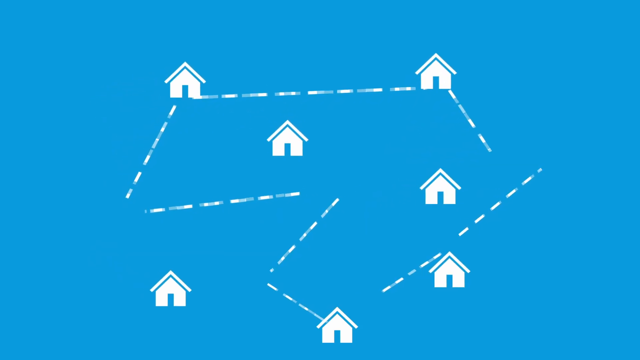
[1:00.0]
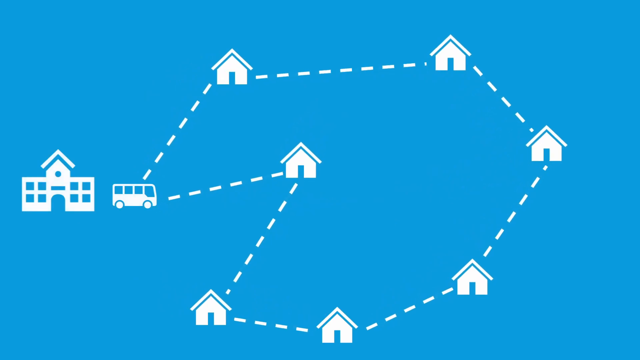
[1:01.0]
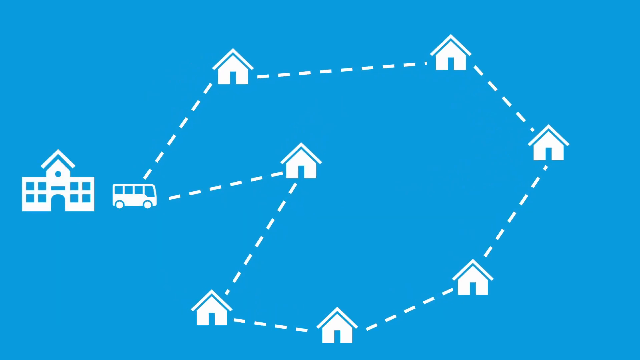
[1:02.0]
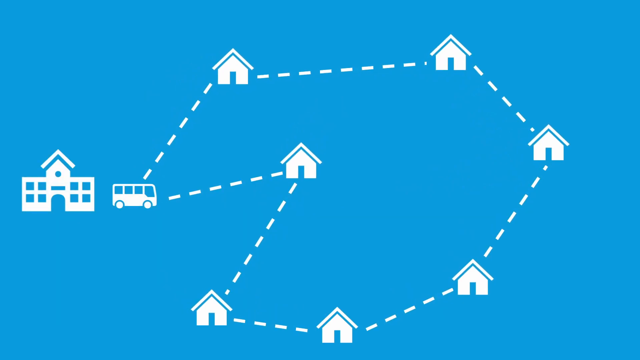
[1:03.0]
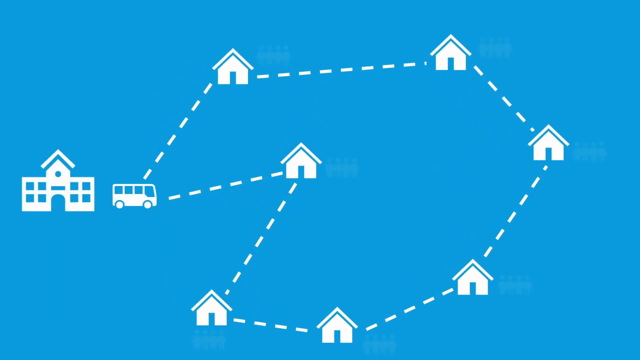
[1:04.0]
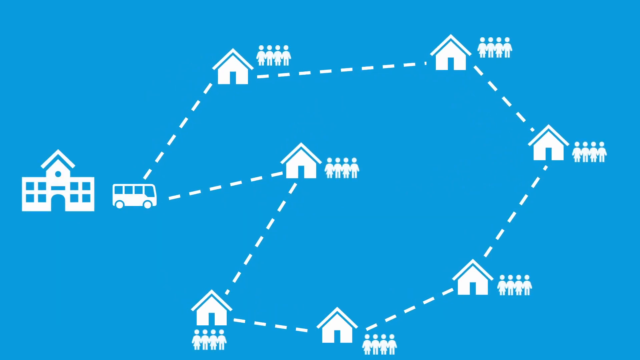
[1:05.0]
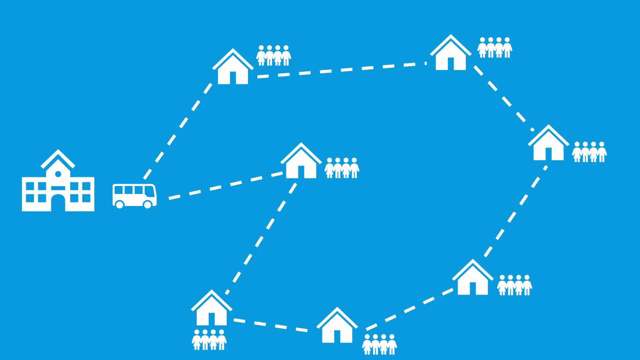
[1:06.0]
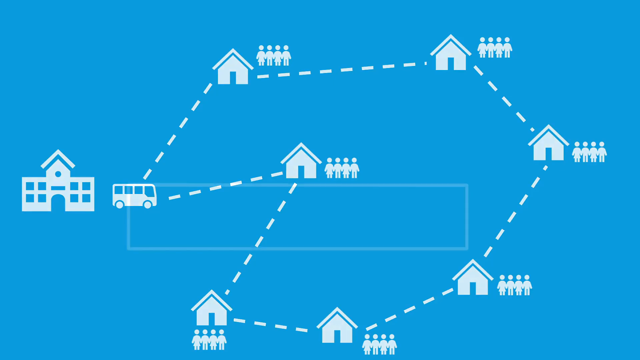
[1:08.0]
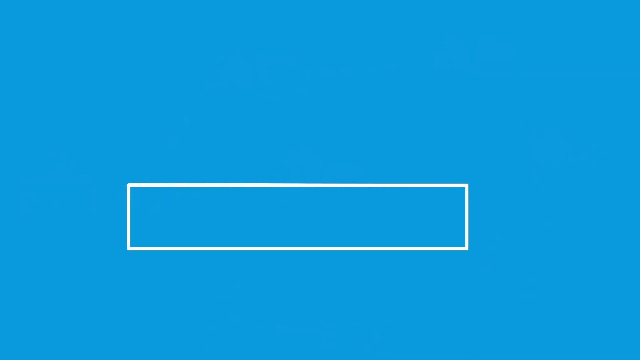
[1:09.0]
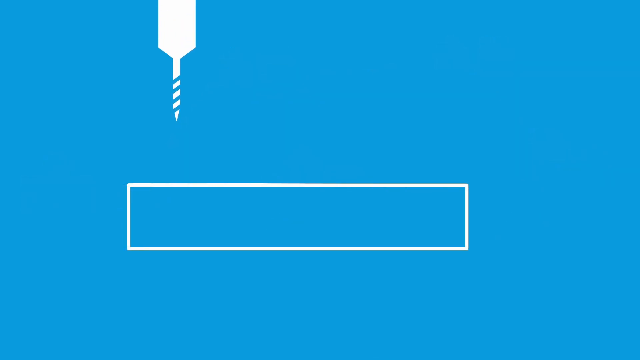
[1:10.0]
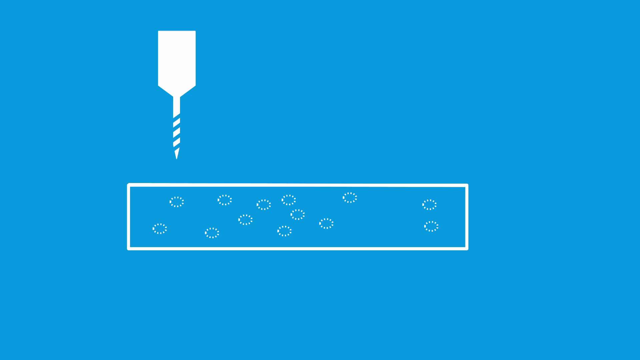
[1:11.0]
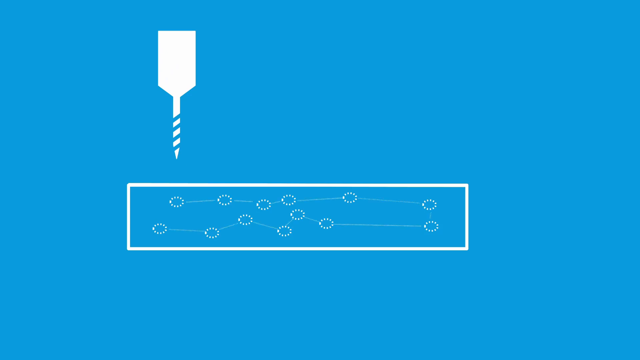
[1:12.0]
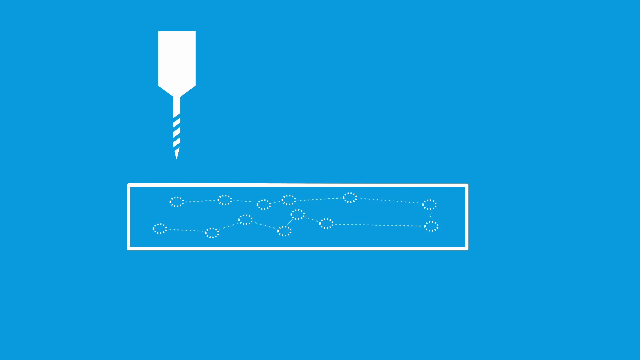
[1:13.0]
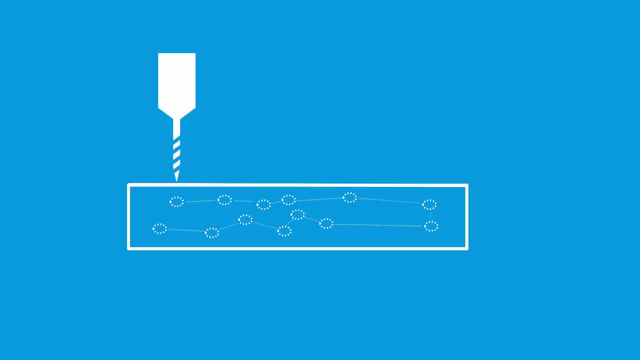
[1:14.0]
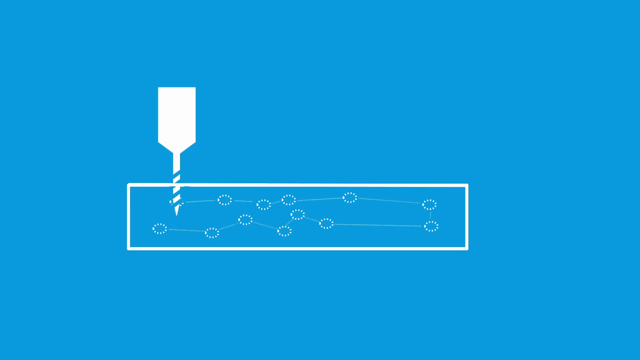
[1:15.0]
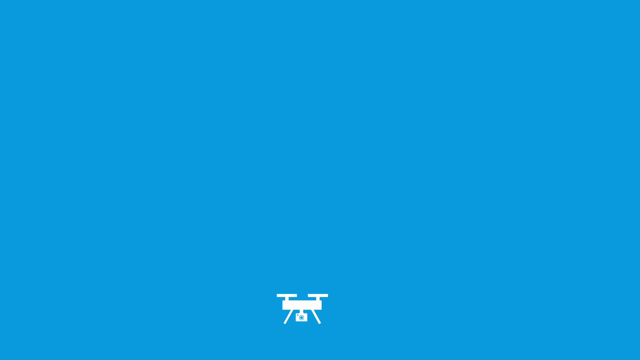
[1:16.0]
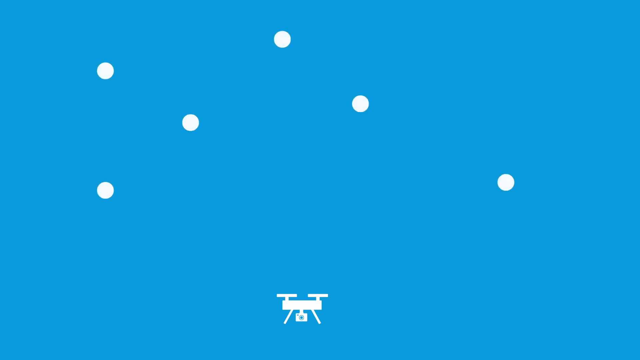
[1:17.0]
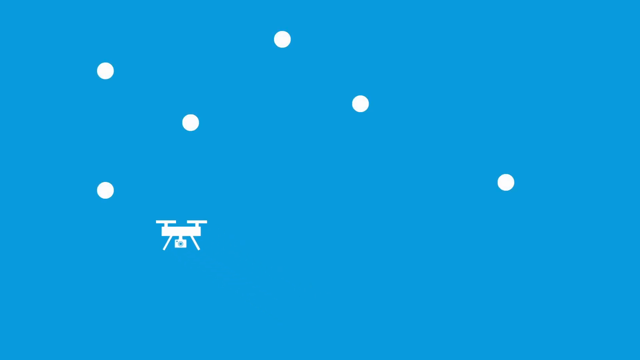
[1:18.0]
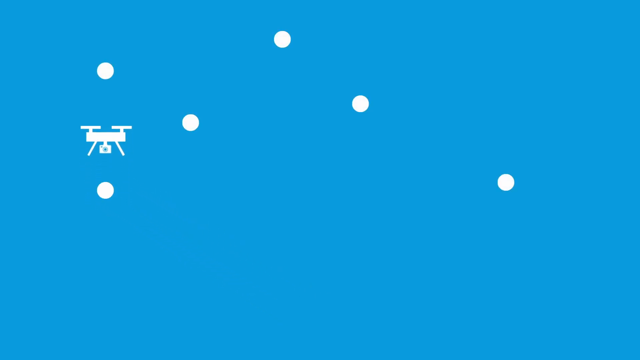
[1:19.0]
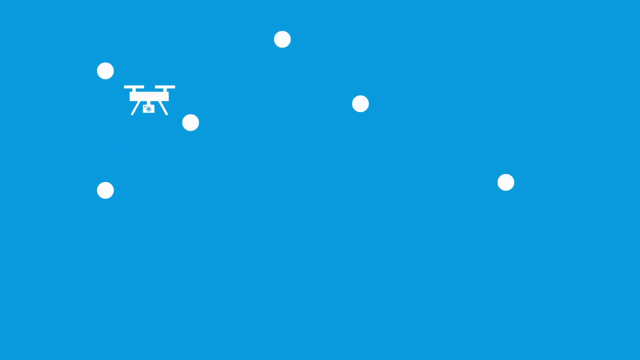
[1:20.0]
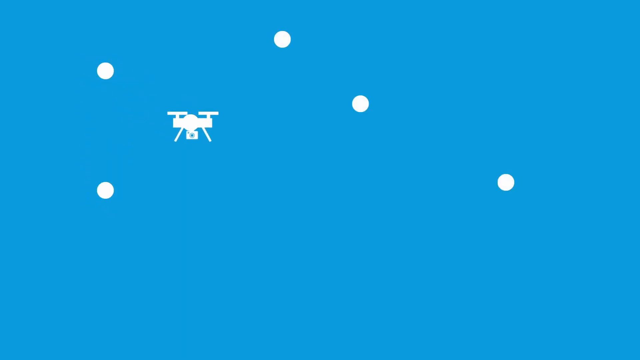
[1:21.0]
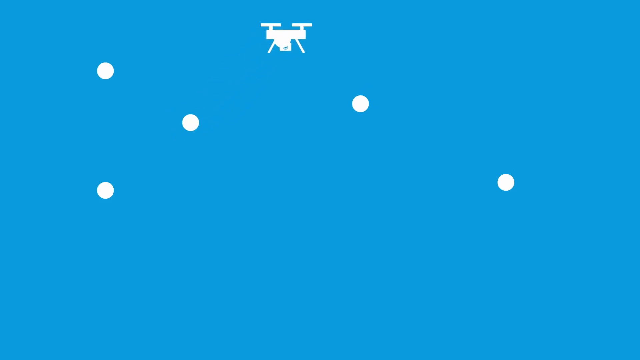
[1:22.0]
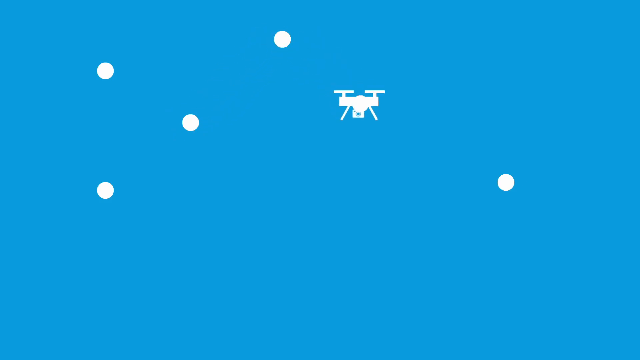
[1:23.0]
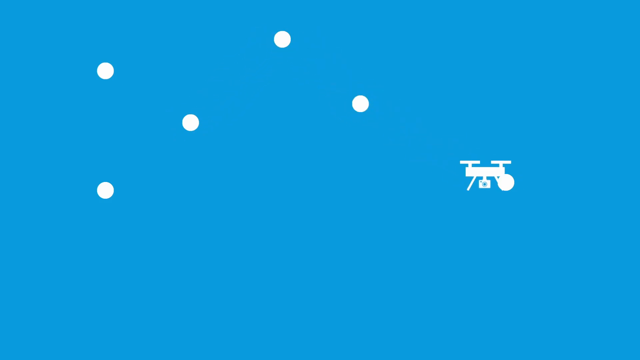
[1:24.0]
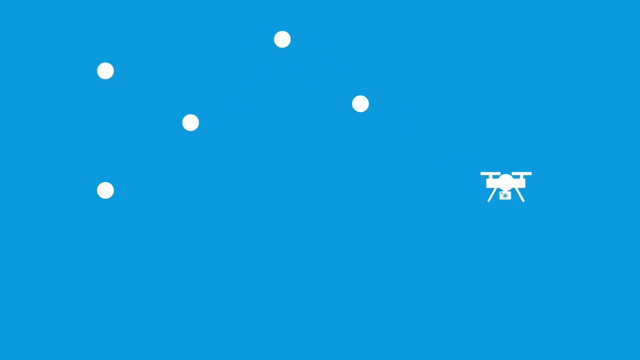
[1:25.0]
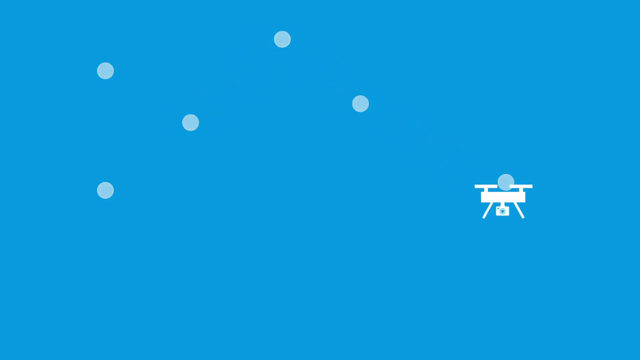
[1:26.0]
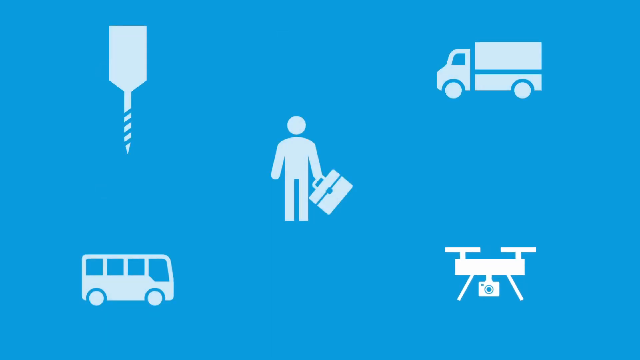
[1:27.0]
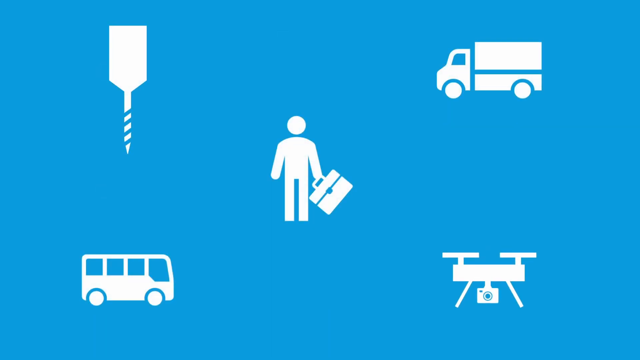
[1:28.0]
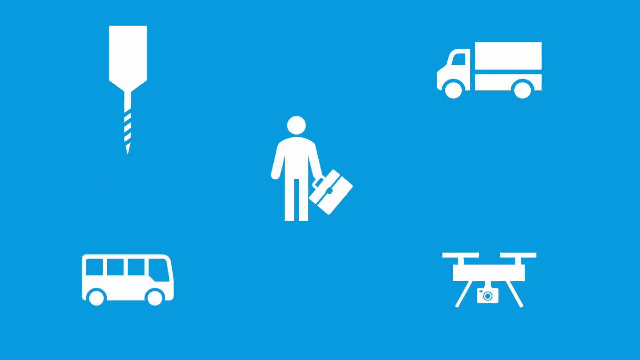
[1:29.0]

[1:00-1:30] Text asks "what is the traveling salesman problem." Each slide has a robin's egg blue, kind of teal-ish background, and all the graphics are white. A truck comes up onto the screen big, then becomes small and is kind of minimized off to the right side. A bunch of houses pop up, and lines go from the truck to all the different houses. The lines then move into another kind of heart shape, this one kind of pointing diagonally down, and the houses move into a different path. A school and a school bus appear to the left, and it almost looks like the school bus is about to go on this route. Four people, women as well as men, then appear next to every house. Next, a screwdriver-like thing comes off the top and goes into some holes or something in a rectangle.